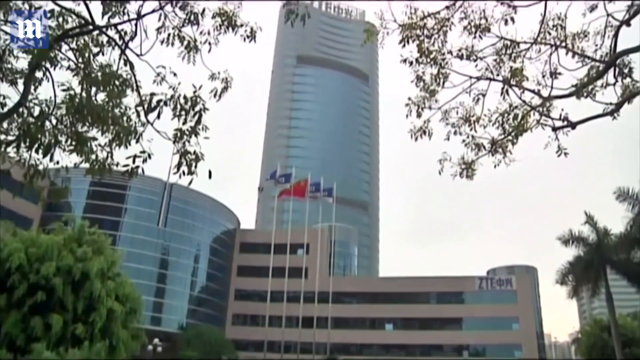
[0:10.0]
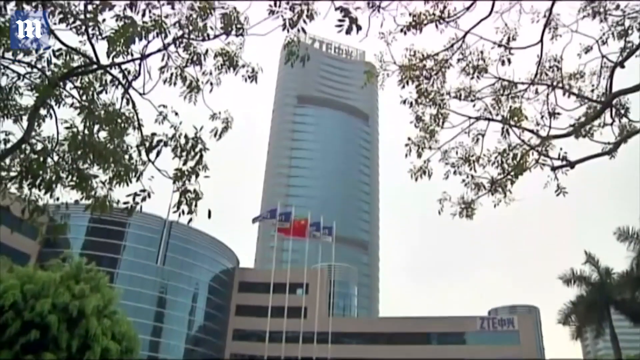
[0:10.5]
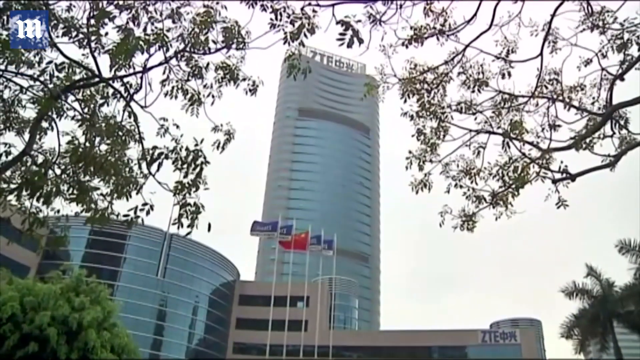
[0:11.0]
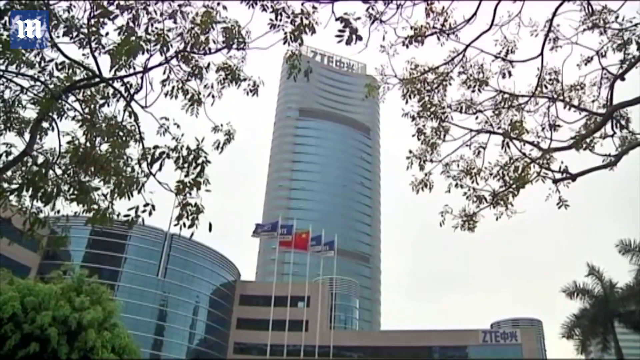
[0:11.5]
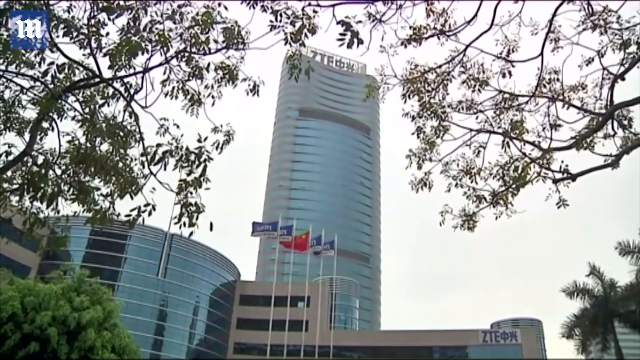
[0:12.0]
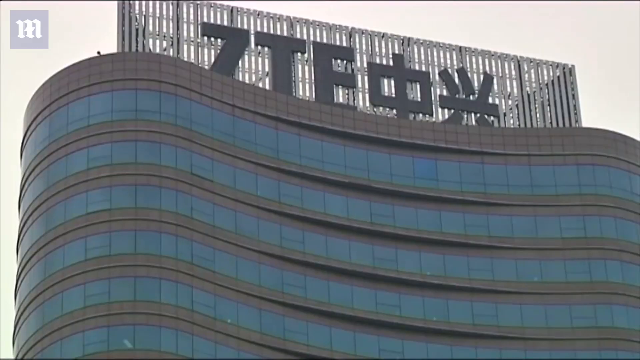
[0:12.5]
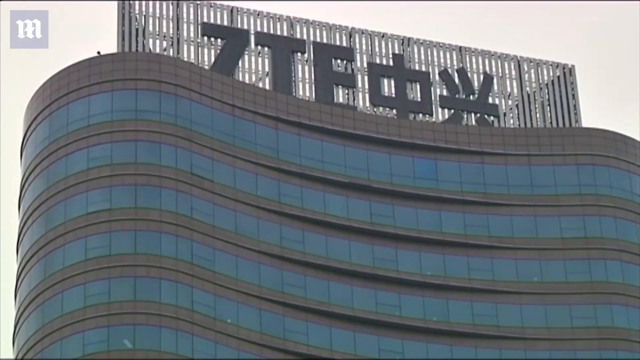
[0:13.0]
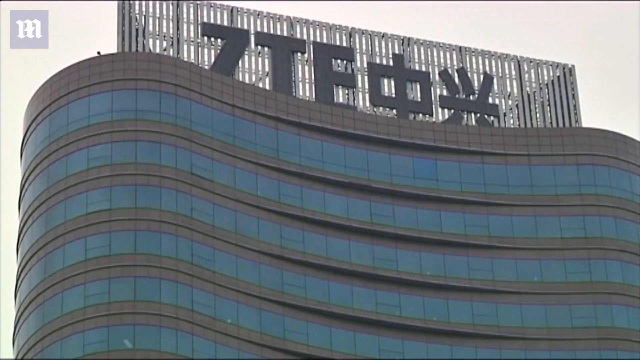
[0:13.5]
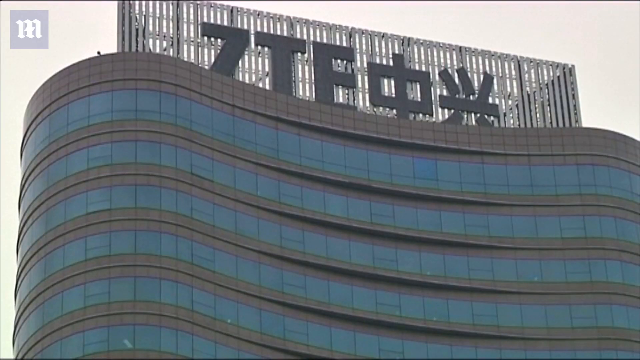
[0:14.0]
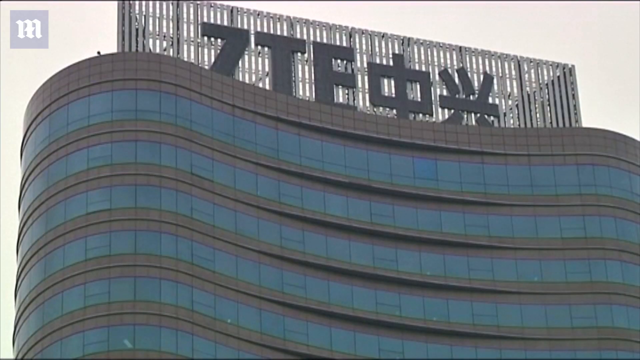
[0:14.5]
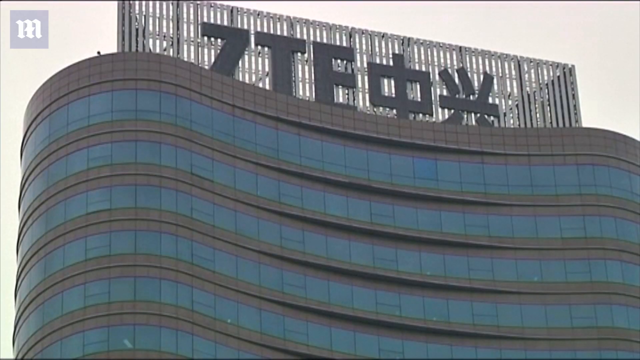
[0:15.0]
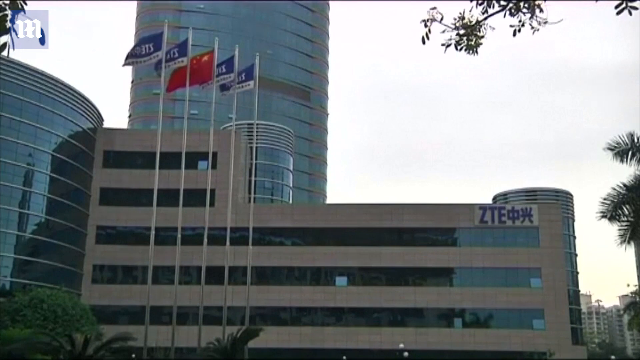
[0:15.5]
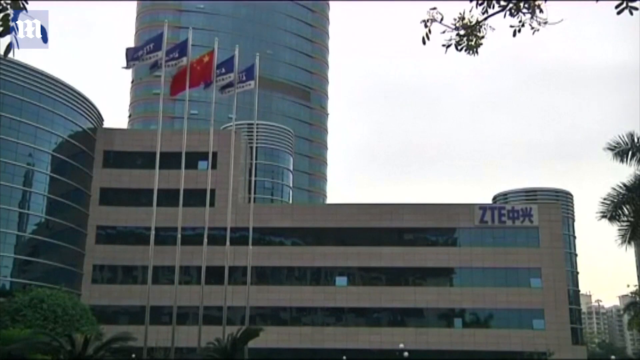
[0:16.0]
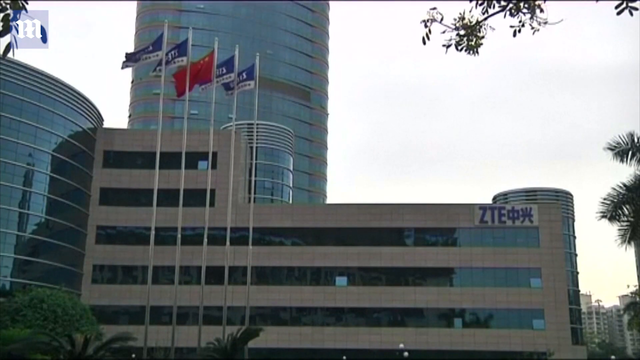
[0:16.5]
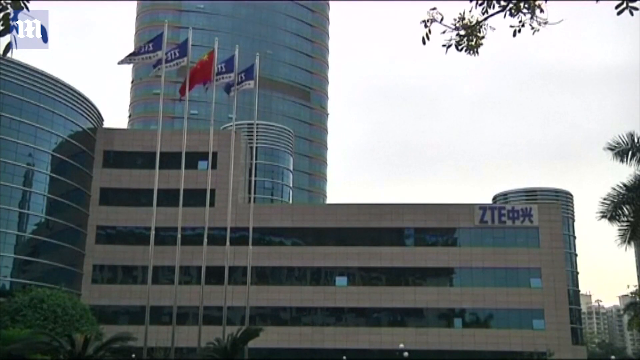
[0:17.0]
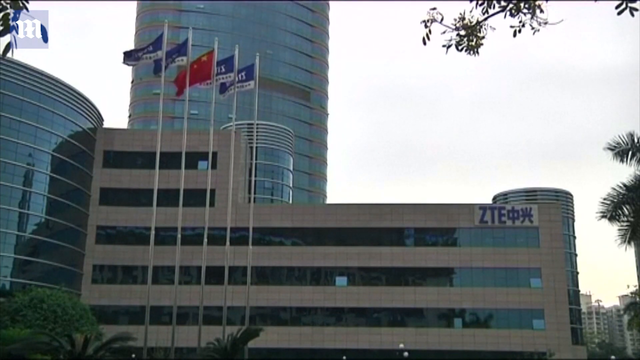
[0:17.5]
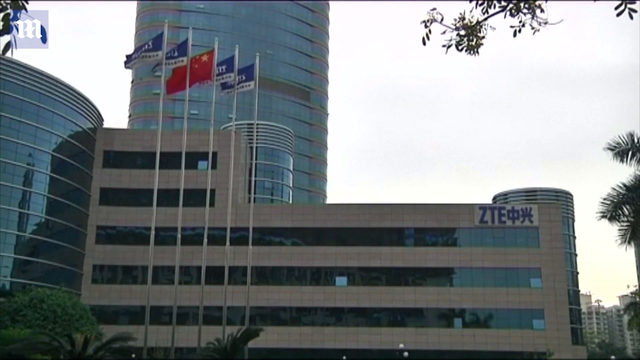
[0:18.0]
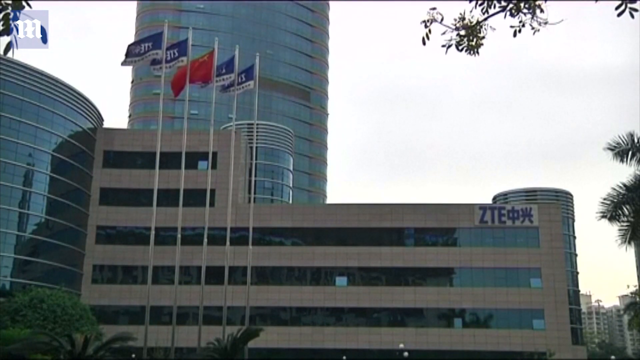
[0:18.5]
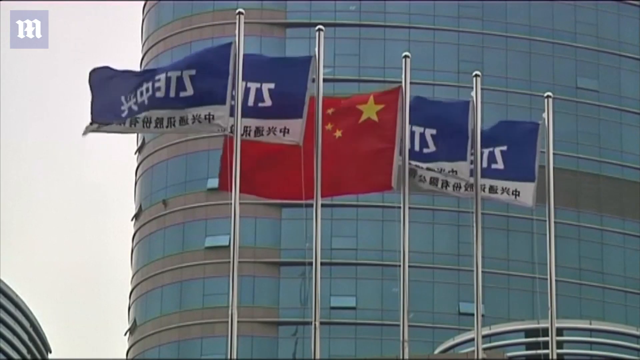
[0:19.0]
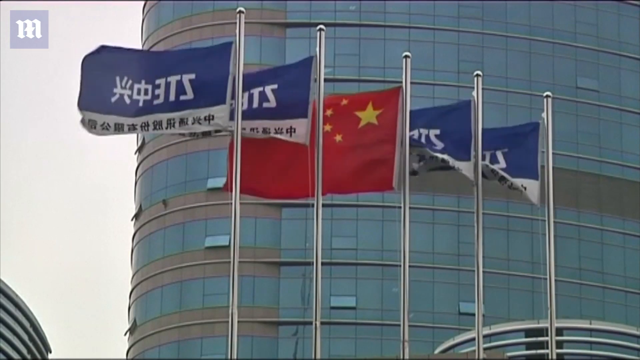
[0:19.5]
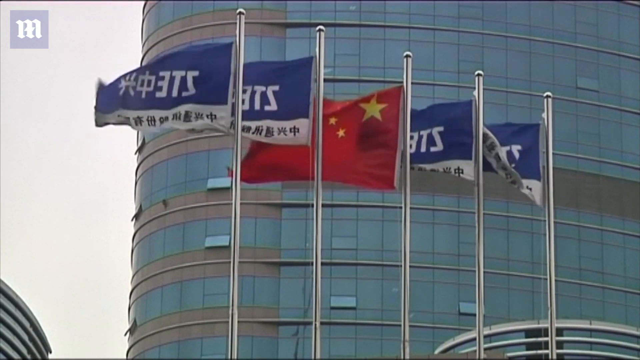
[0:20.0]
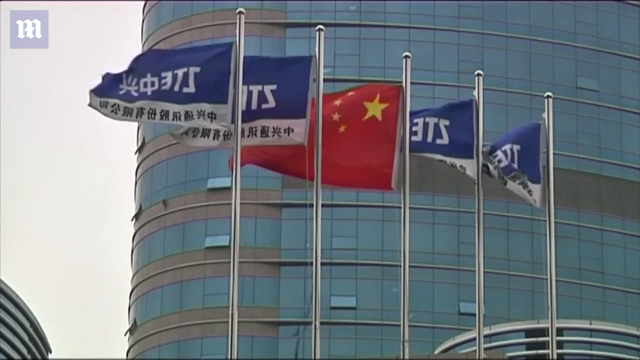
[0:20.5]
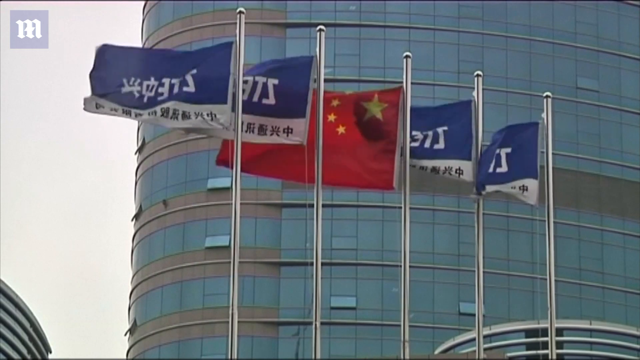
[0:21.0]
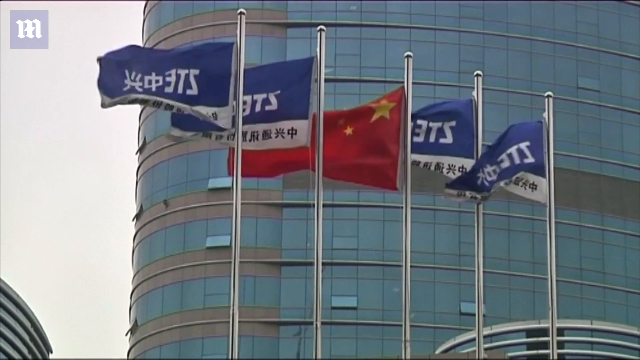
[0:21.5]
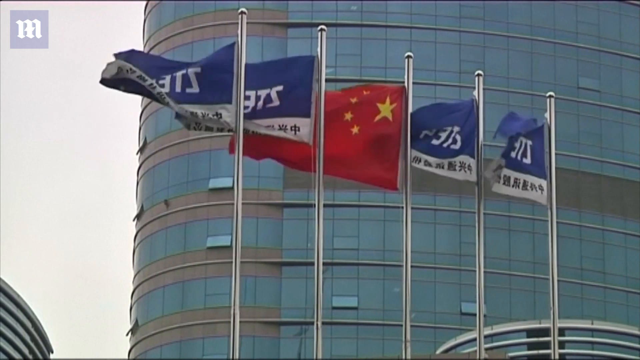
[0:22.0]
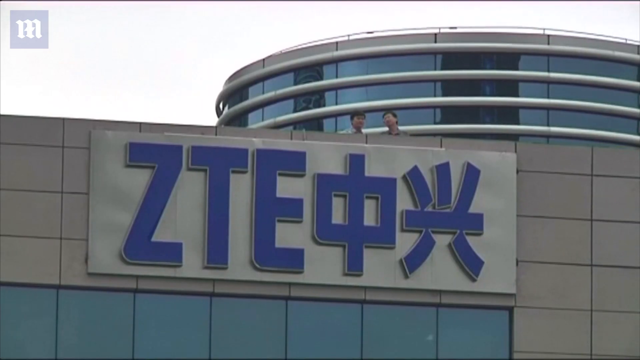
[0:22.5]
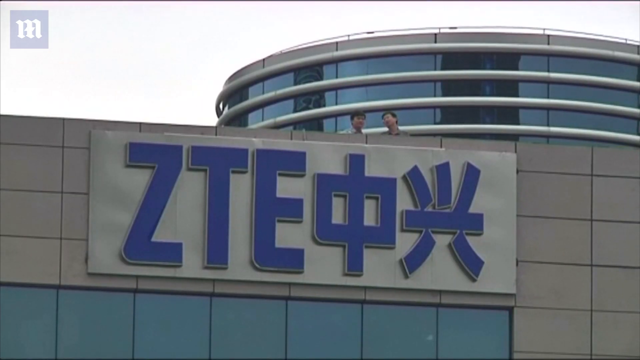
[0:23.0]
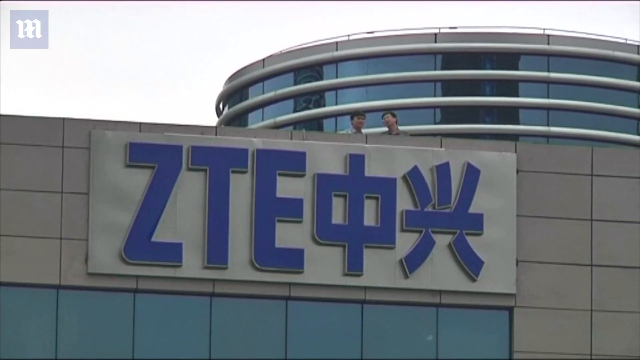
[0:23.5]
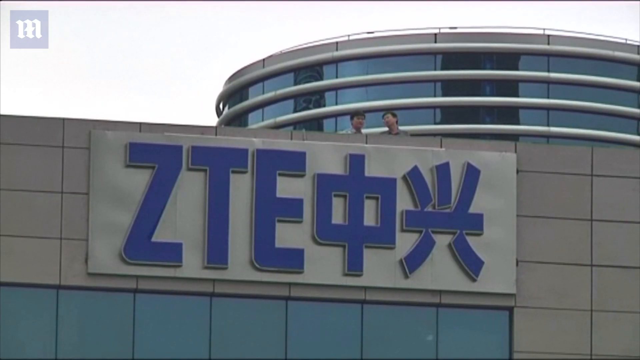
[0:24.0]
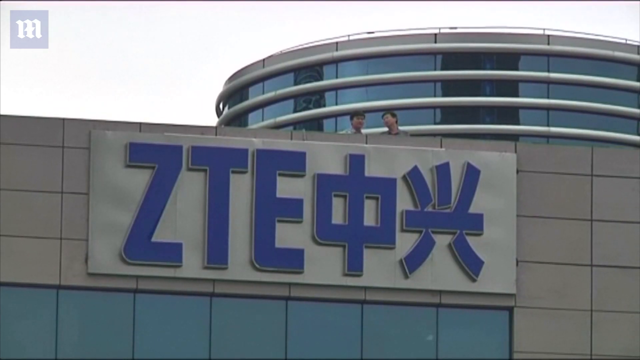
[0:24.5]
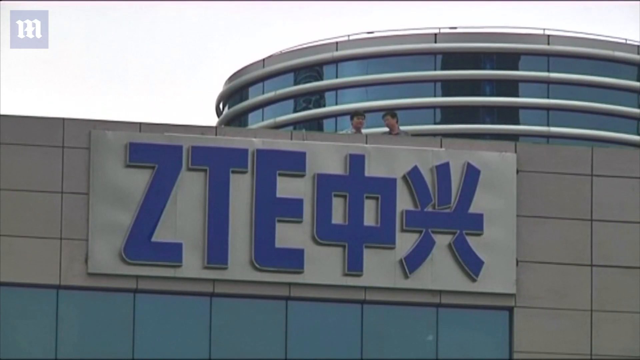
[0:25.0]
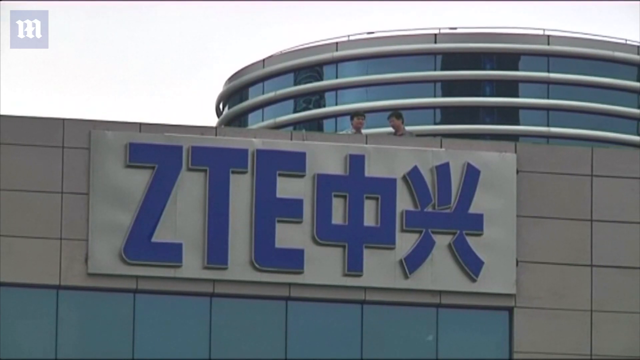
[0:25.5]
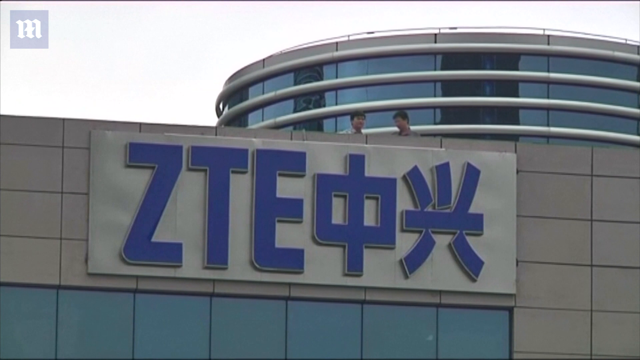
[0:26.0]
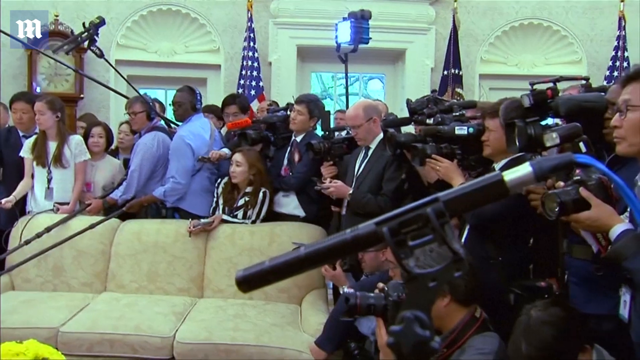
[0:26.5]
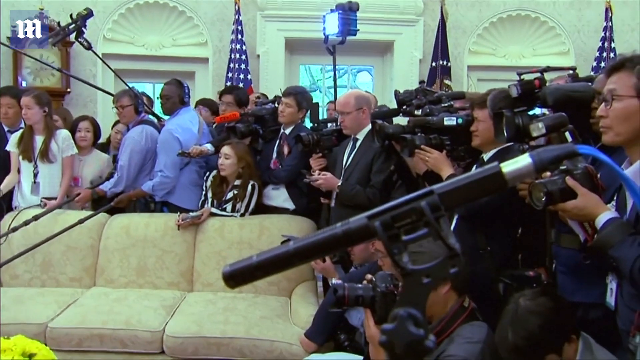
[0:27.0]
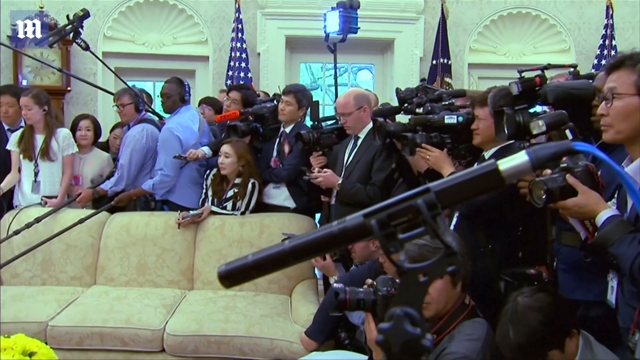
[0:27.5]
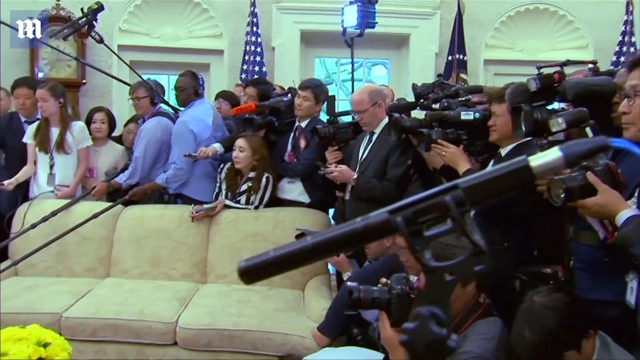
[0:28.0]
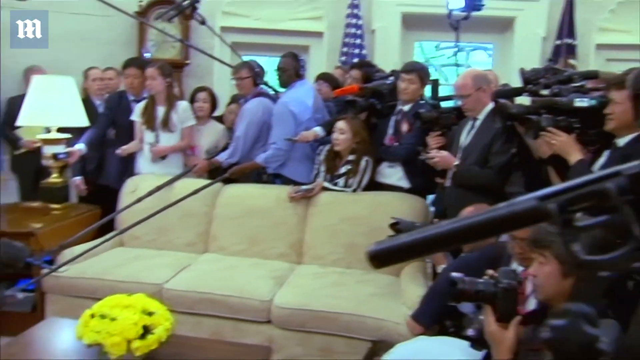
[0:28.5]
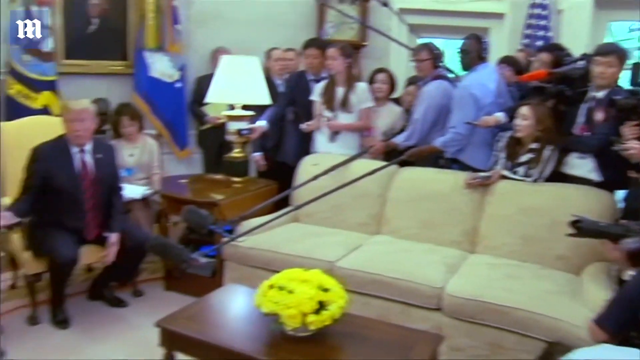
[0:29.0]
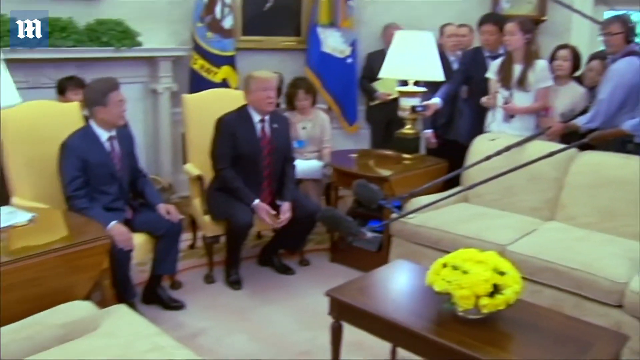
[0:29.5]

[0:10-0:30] A tower appears, and Donald Trump and the ZTE co-founder hold a bilateral conversation, deliberating on issues.